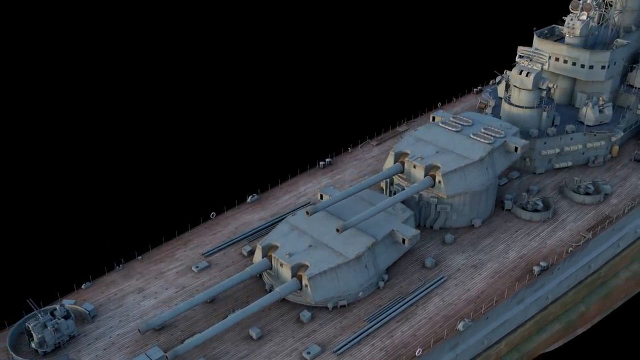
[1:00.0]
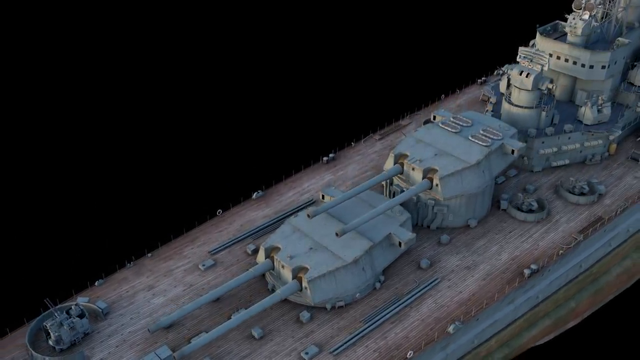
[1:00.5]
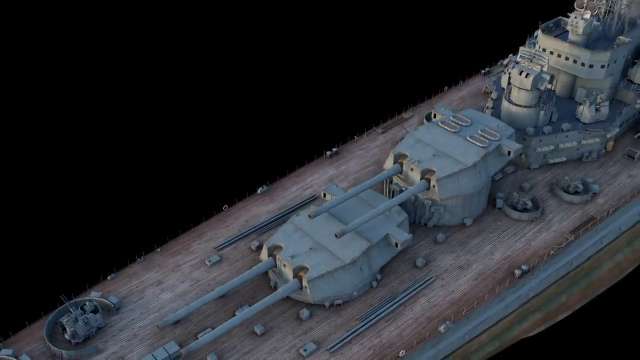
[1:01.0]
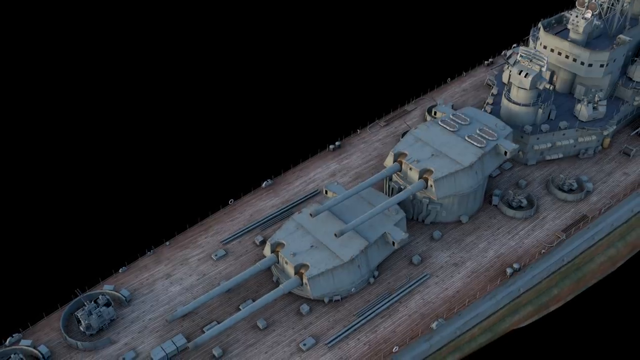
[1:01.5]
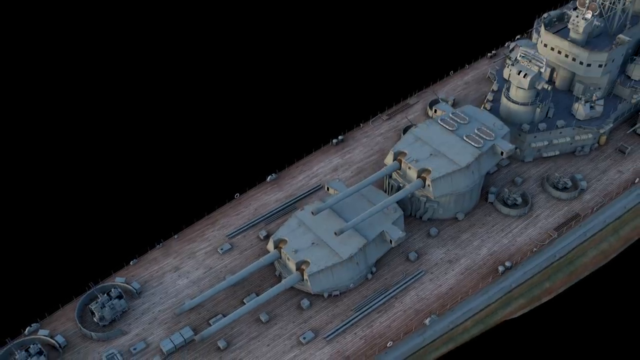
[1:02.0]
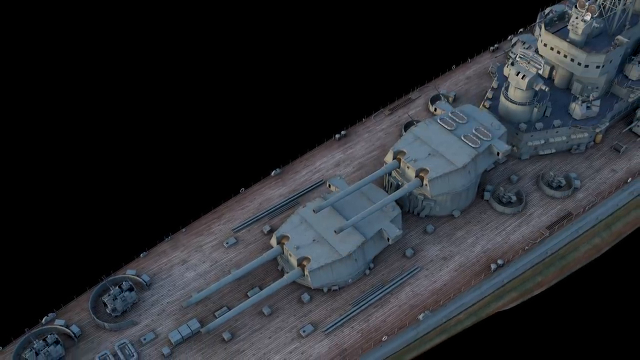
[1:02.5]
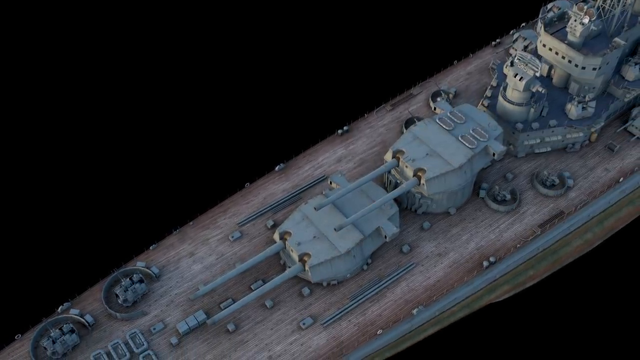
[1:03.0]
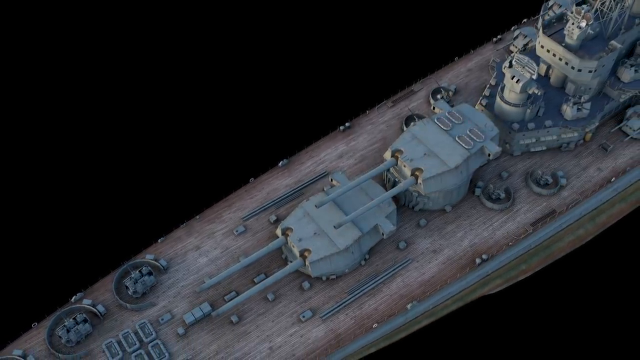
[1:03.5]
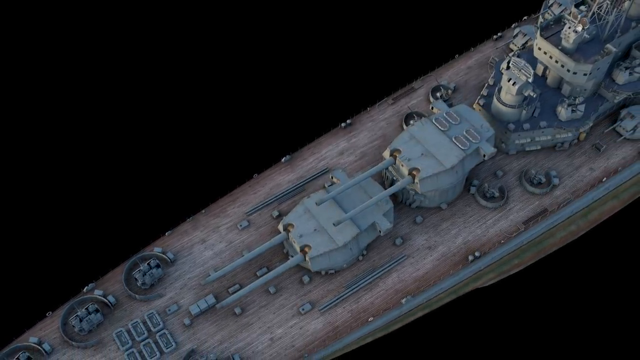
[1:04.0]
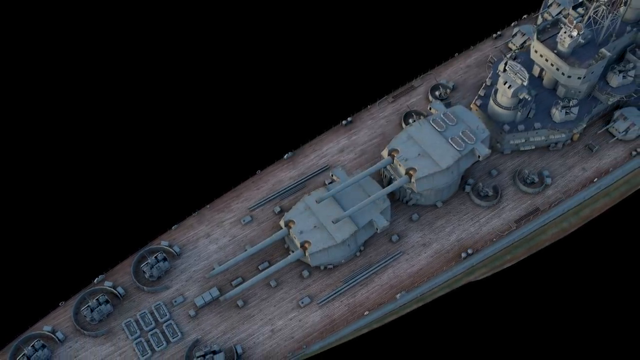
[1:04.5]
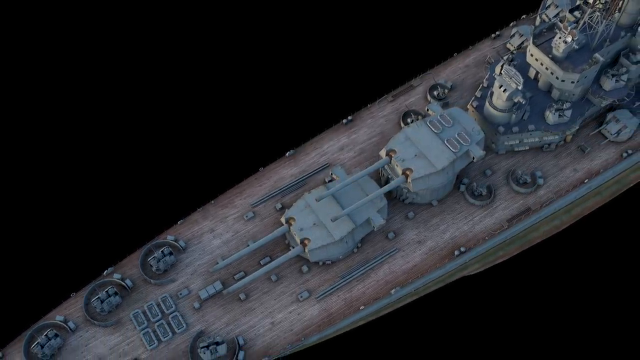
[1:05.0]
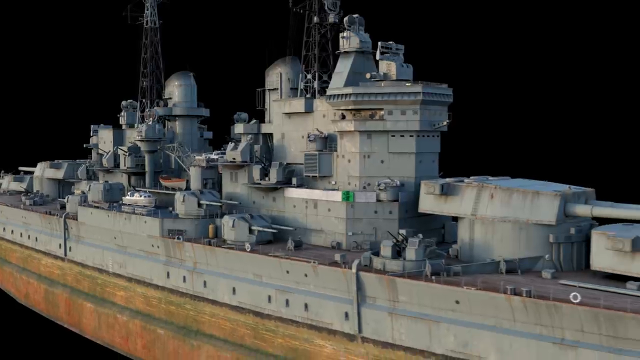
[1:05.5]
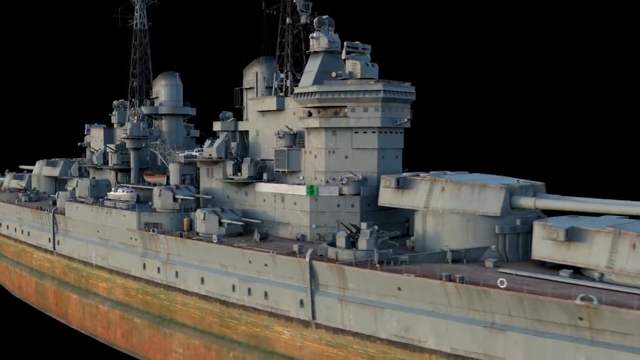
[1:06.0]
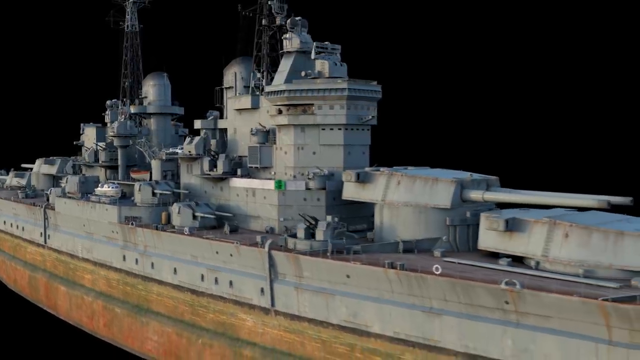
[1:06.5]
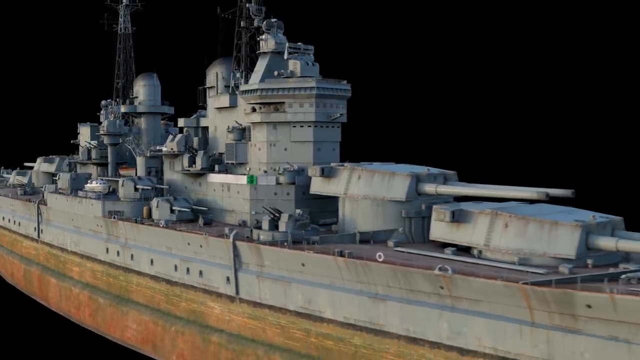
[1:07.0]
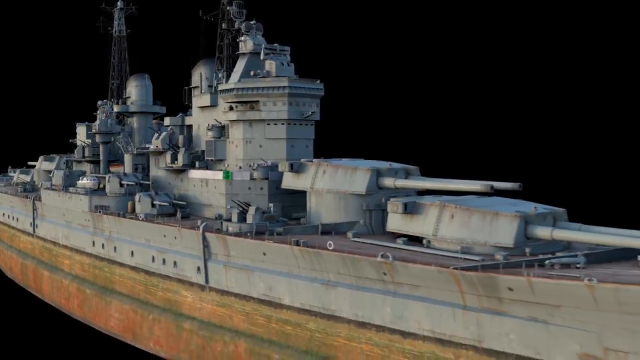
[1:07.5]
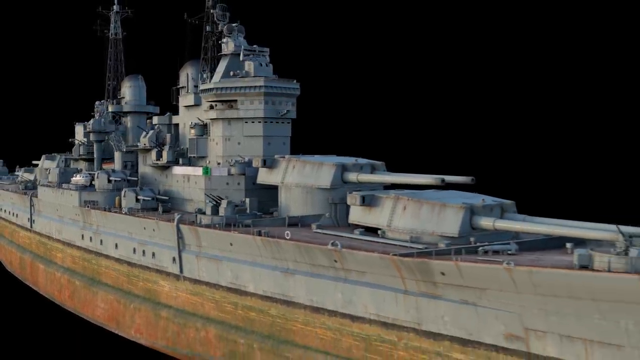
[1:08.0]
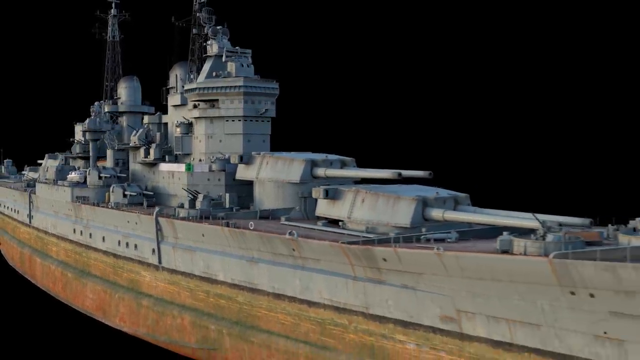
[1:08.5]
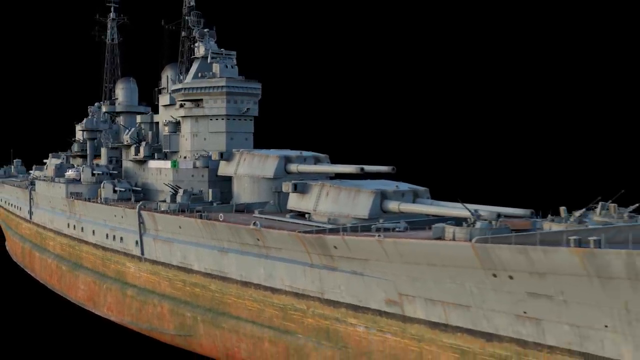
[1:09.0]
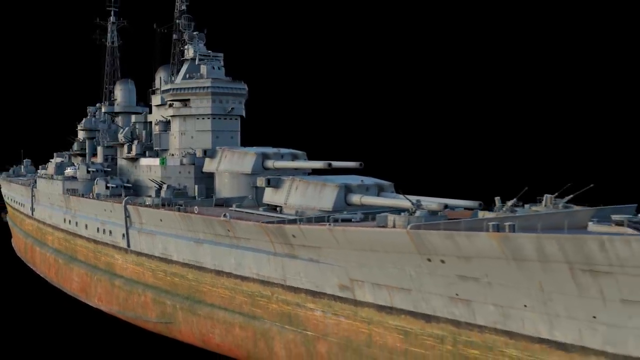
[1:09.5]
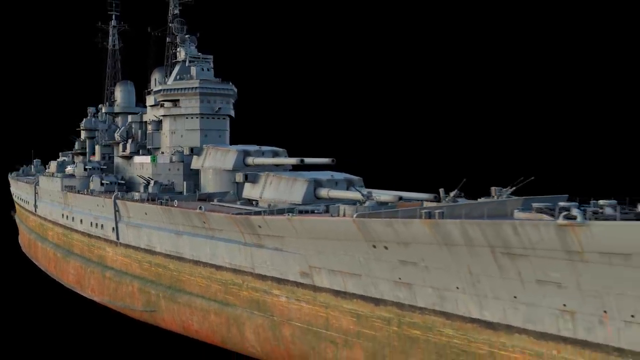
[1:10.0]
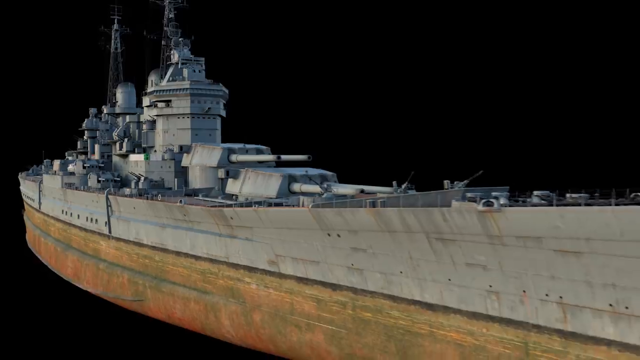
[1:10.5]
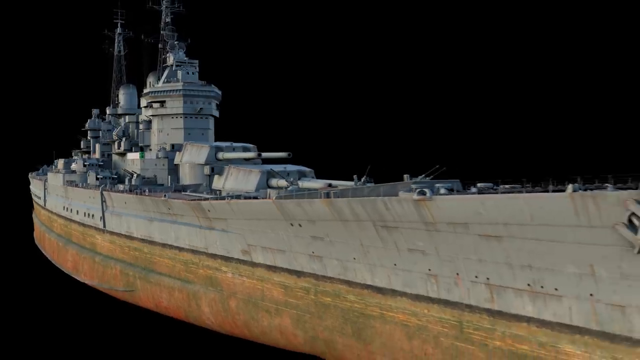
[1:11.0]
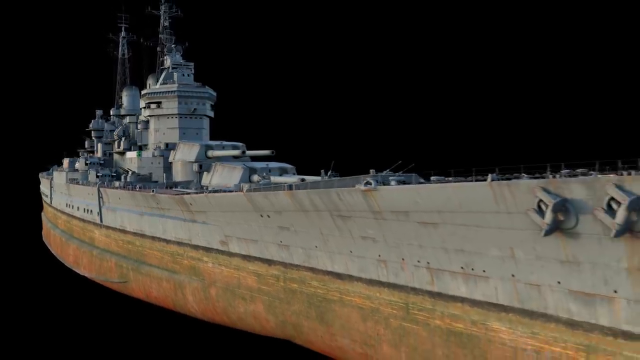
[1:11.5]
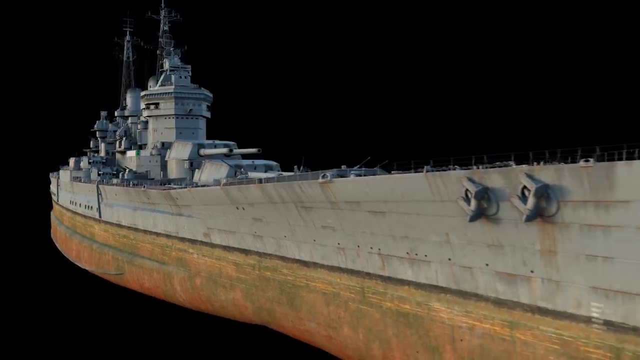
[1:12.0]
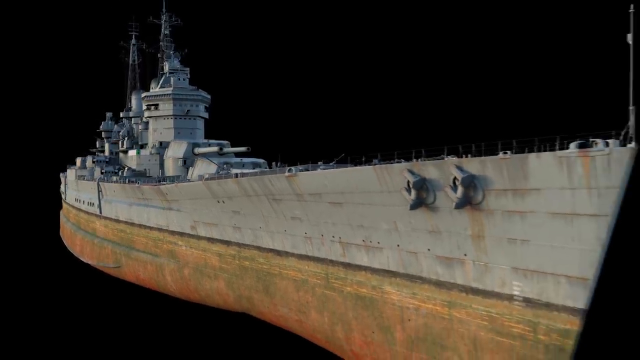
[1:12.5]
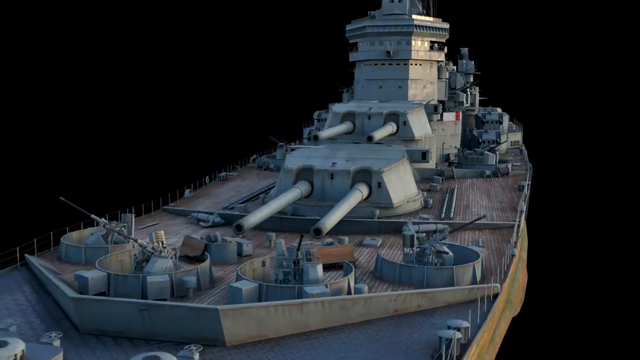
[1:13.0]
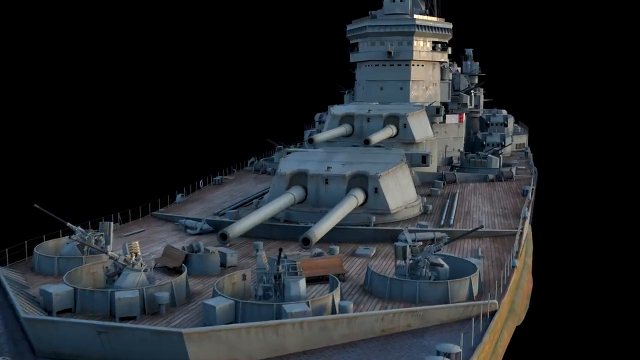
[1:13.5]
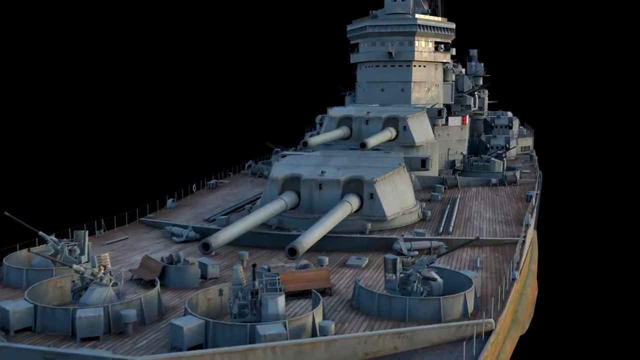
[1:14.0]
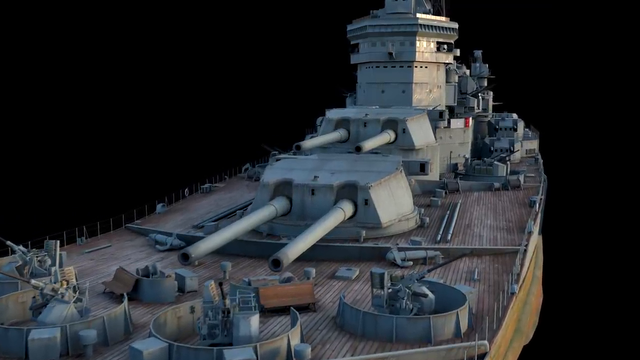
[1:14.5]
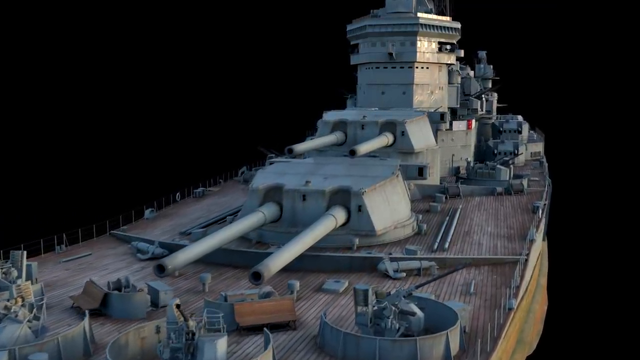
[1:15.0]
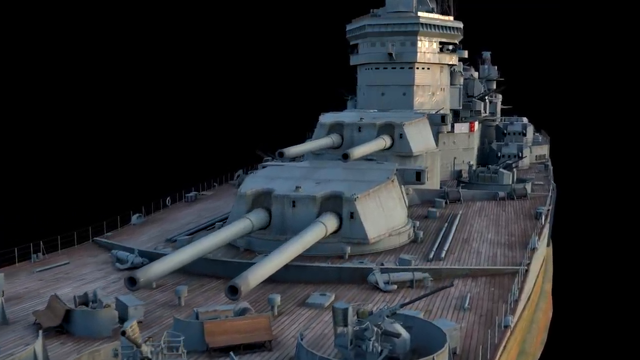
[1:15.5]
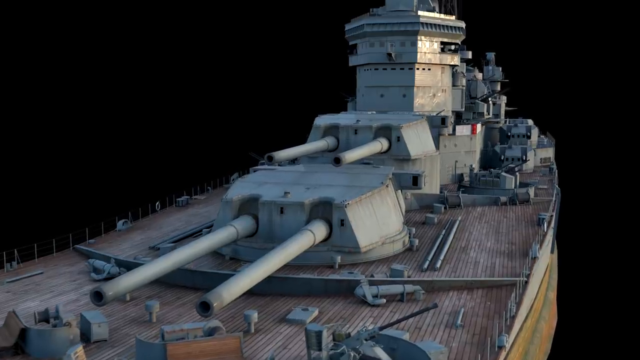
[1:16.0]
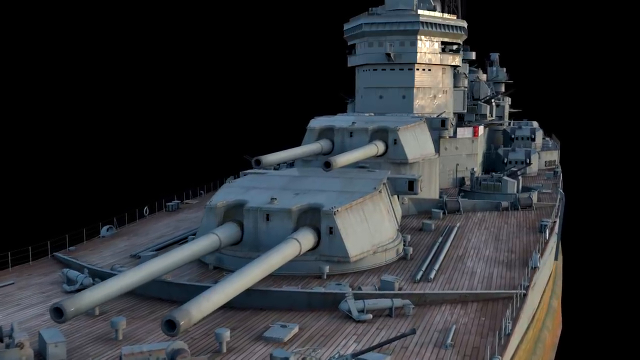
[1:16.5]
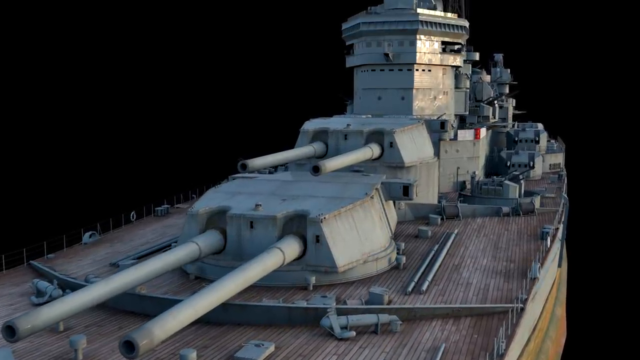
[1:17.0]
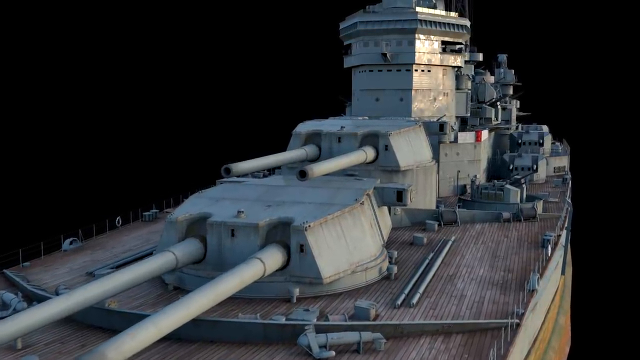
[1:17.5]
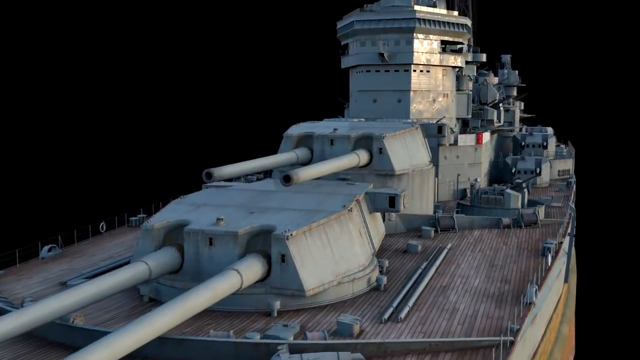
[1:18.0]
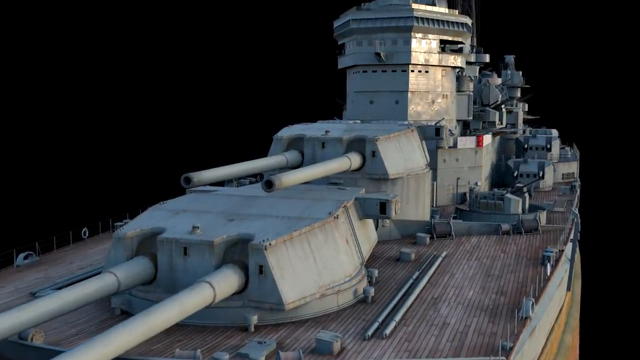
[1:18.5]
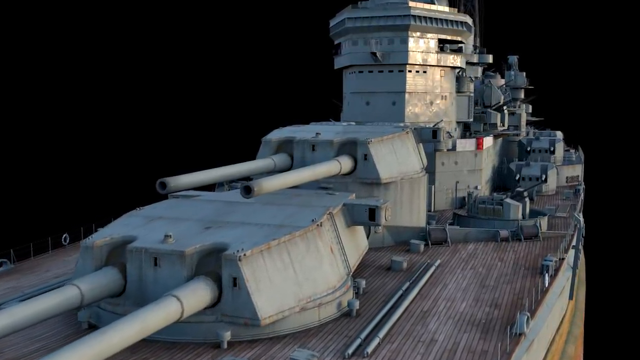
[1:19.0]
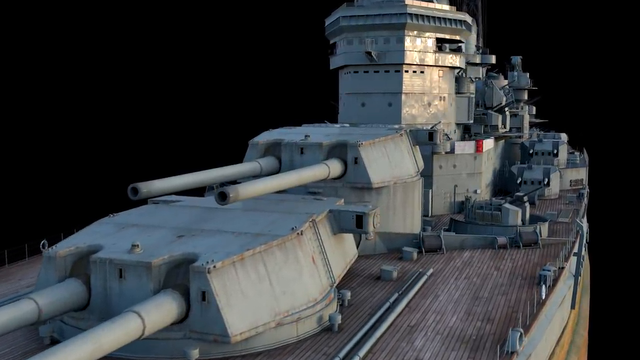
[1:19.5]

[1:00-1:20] The CGI rendering starts at the top, looking down on the warship. Everything is in grays, making the warship appear weathered. The rendering changes angles, looking from the front of the ship to the back, and slowly the side of the ship is shown with all of its details. At the end, one red object is shown on the right side of the ship. The wood panels of the deck look very worn and weathered, as does the ship itself, apparently rendered that way intentionally. Various angles of the ship are shown, including the bottom, the sides, the front and the back.